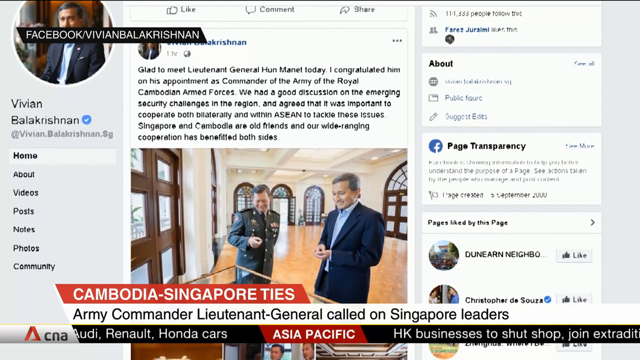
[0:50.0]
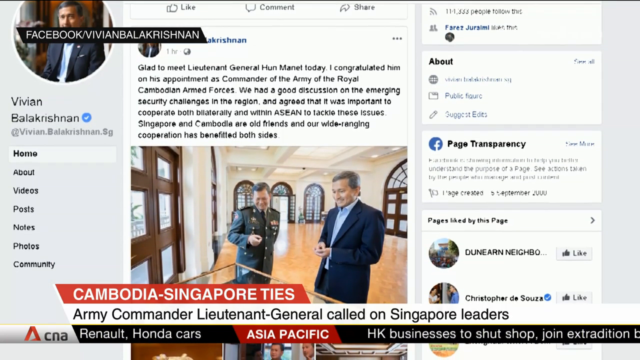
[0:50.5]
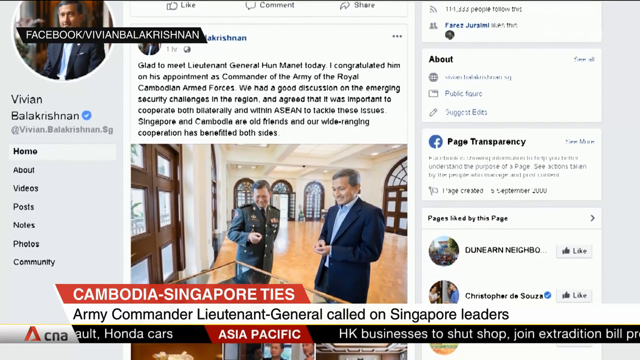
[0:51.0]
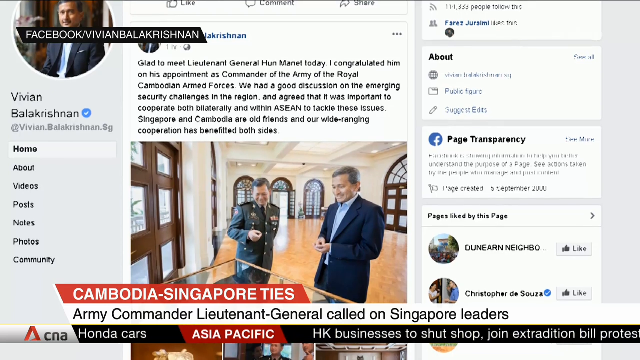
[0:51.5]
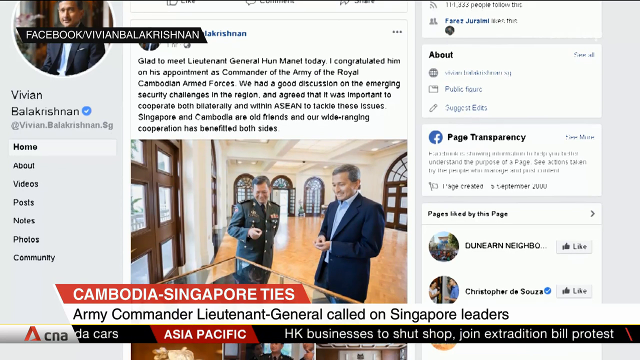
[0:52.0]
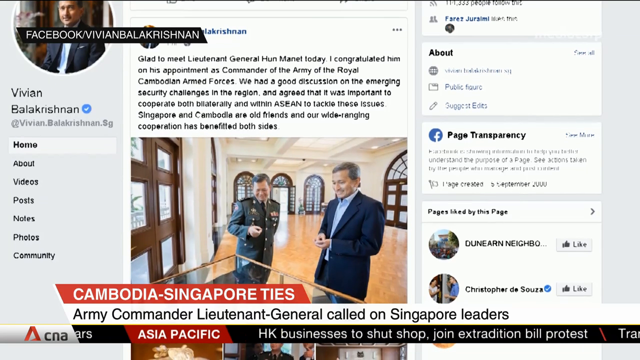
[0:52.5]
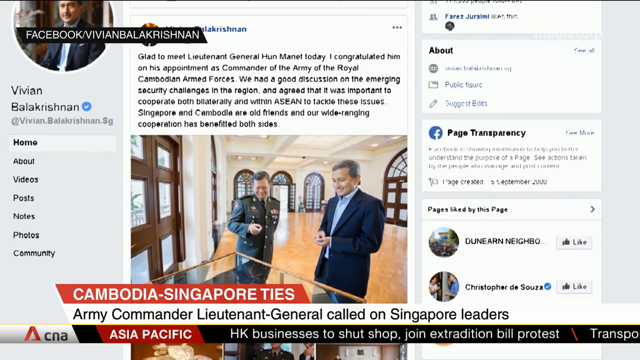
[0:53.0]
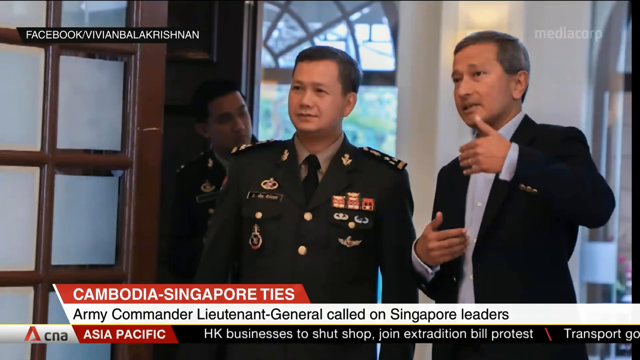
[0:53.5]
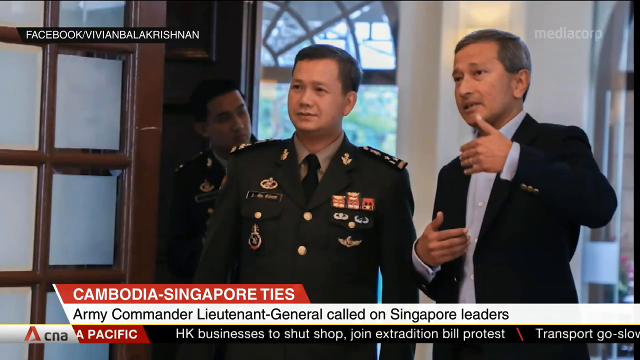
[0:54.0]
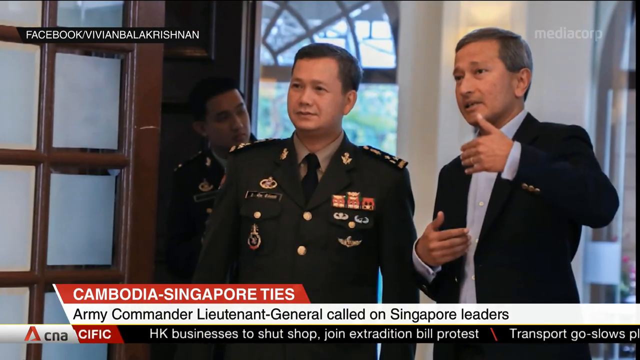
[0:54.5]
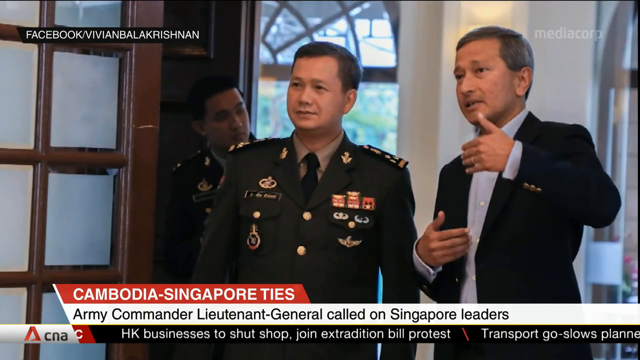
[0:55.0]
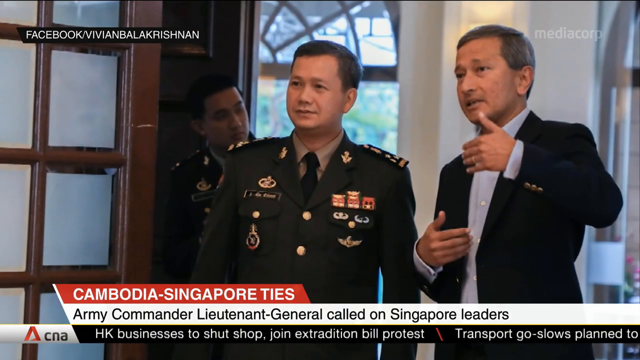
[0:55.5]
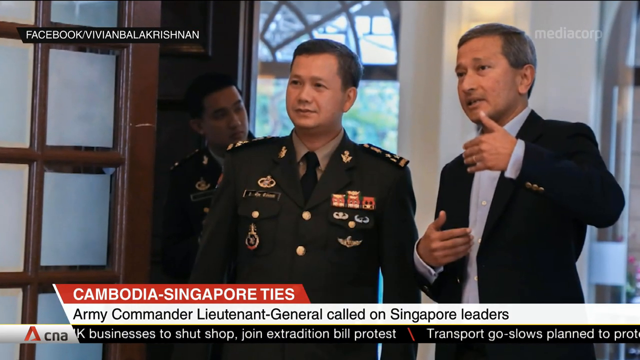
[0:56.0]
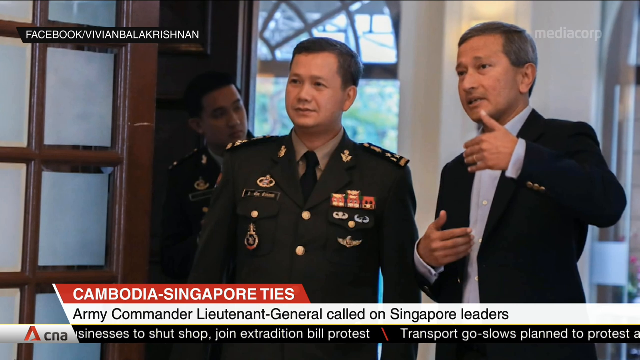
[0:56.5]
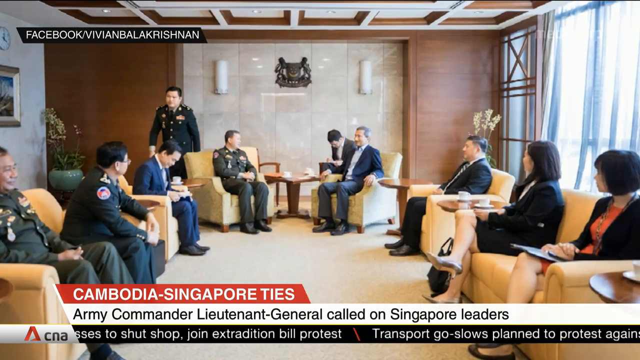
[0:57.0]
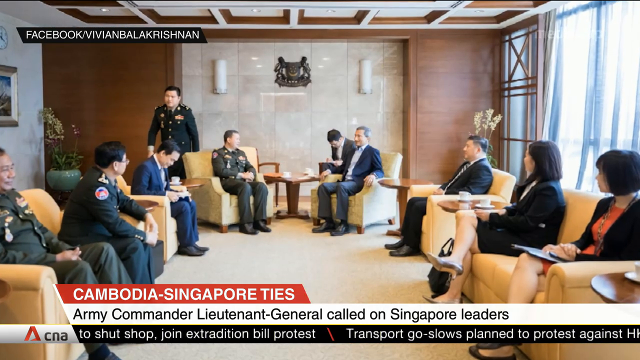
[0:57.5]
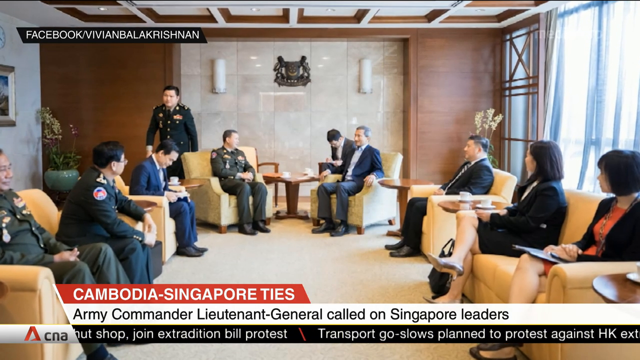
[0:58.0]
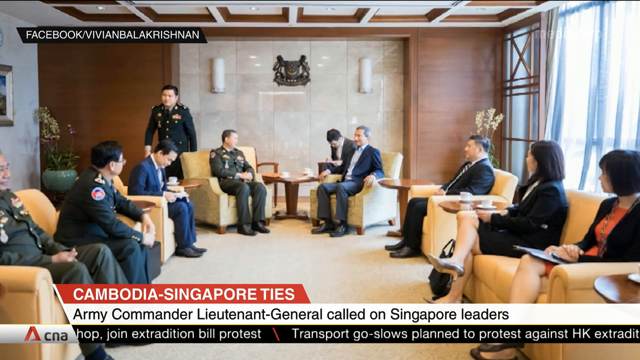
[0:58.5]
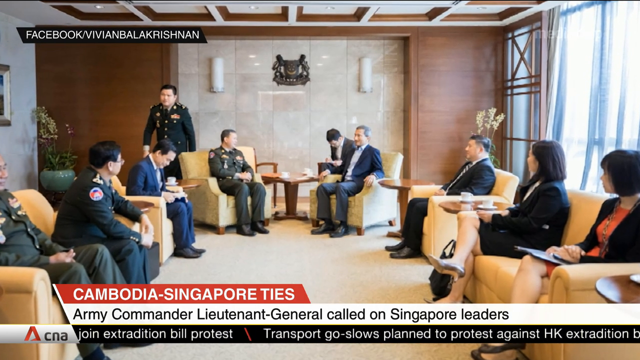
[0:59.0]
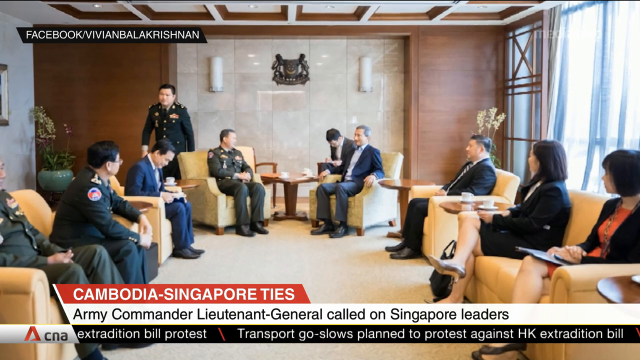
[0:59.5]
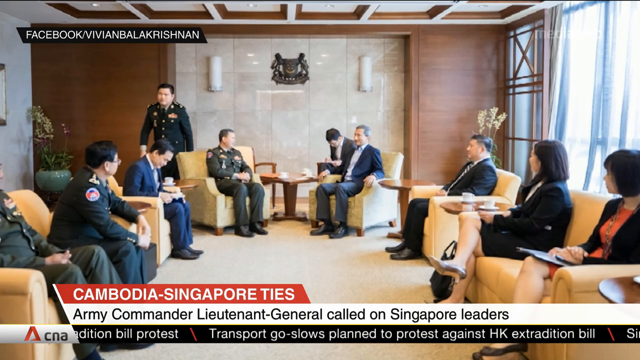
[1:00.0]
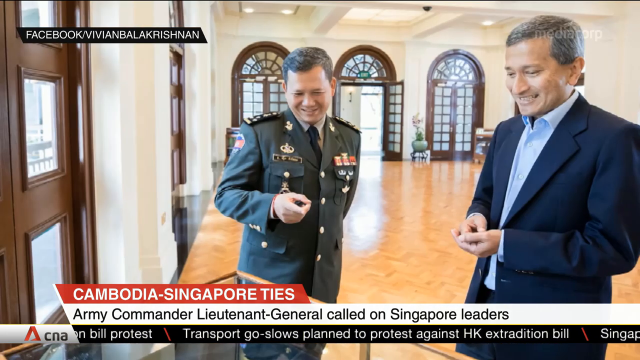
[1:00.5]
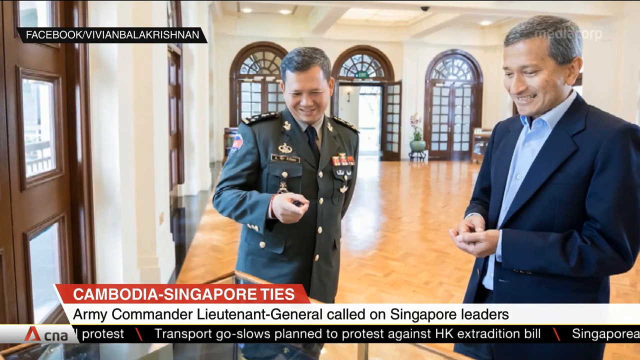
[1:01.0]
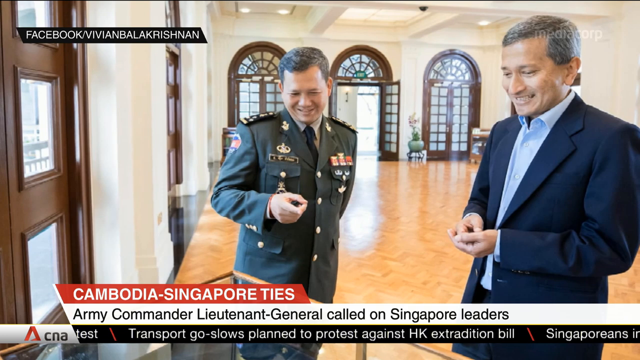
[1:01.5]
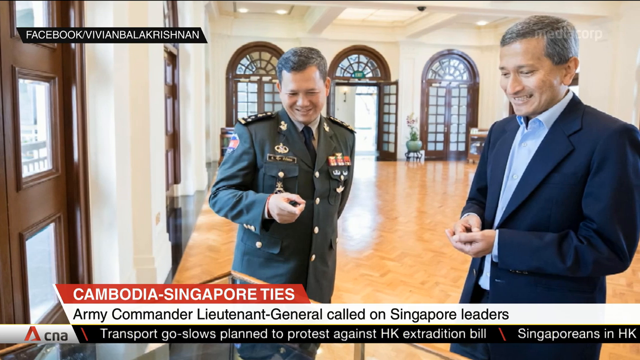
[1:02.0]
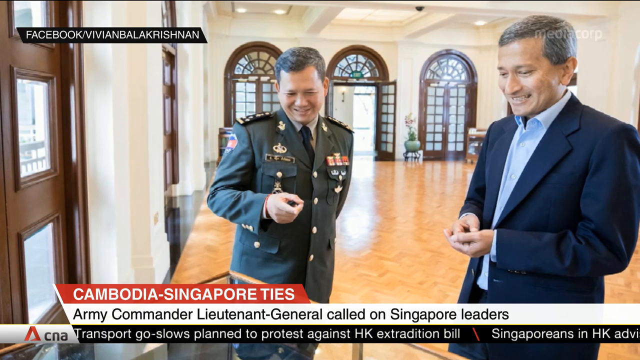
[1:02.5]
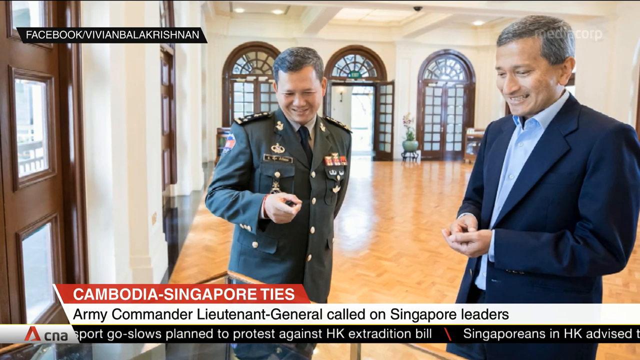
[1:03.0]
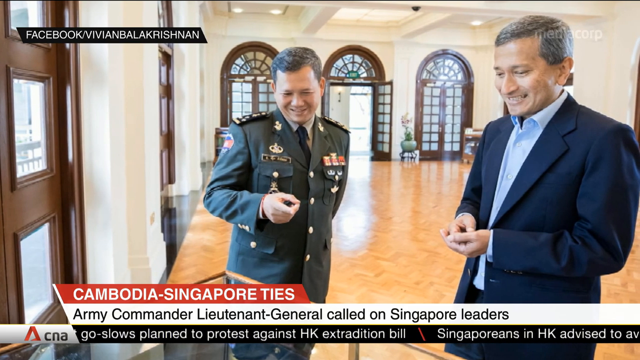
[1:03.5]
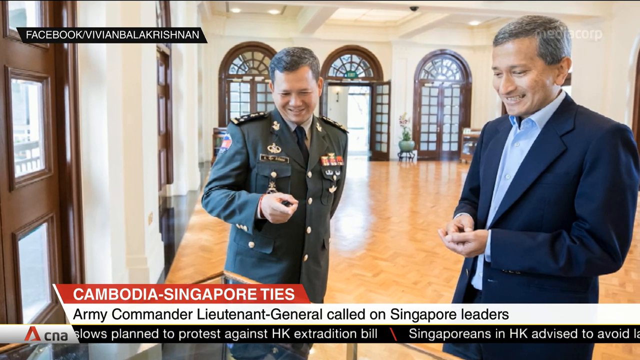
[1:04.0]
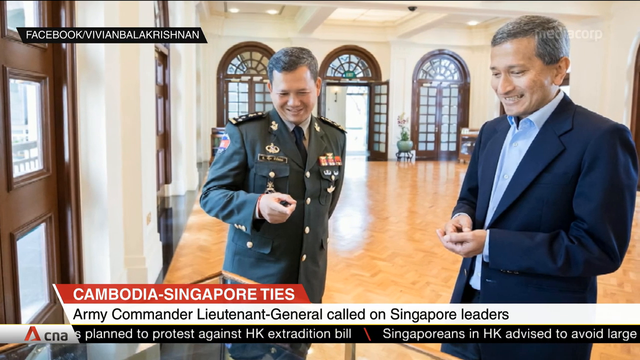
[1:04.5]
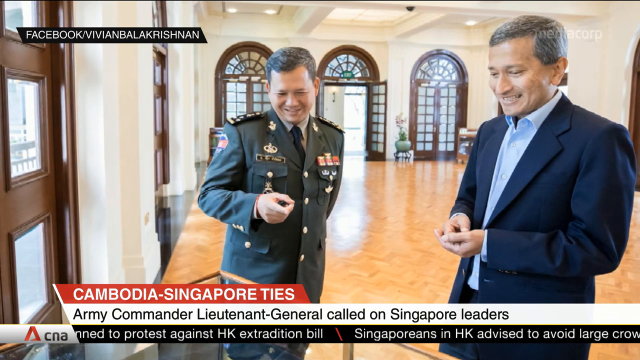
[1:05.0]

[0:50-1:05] The view is still slowly scrolling through Vivian Balakrishnan's Facebook page. It then transitions to a static image of the same two men, this time with the man in the military uniform on the left; he is not smiling. The man without a tie is on the right, gesturing with his raised left hand while his right hand makes a slight gesture lower down; from his facial expression, he looks to be explaining something to the man in the military uniform. Next is a room with several people in it: two women on the far right, and everyone else male, with four of the men wearing military uniforms. The scene then goes back to the two men in a larger room with a wood floor in the background, the man in the military uniform on the left and the man without a tie on the right. Both are smiling and looking at something in a display case. The man in the military uniform looks to be pointing with his left finger, and the man without a tie has his hands held together in front of him.